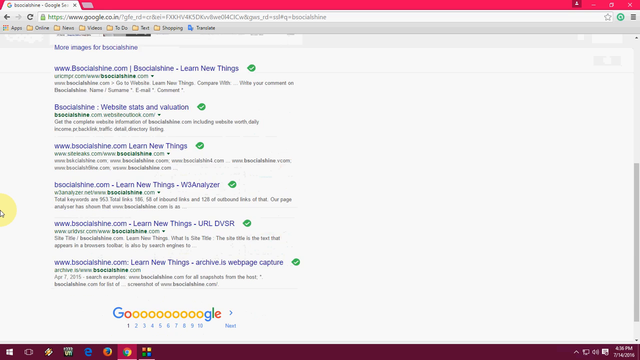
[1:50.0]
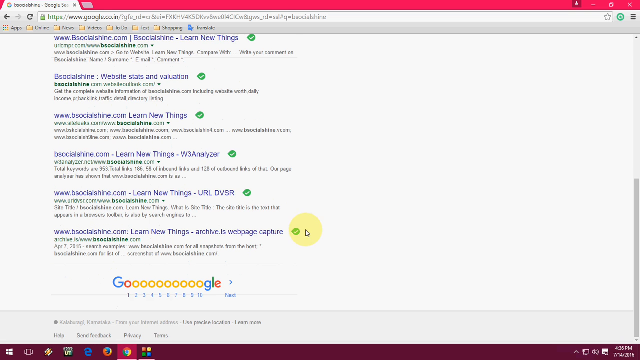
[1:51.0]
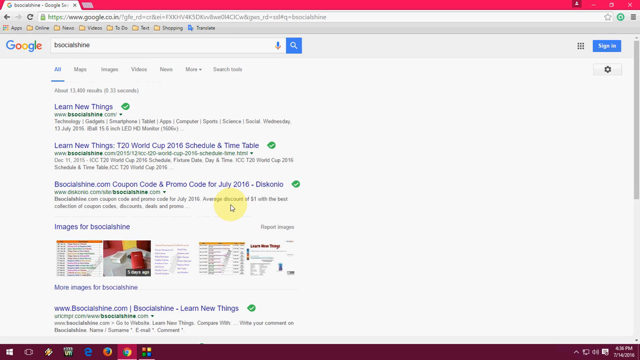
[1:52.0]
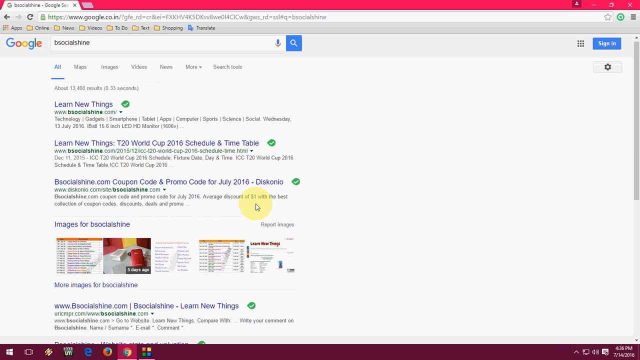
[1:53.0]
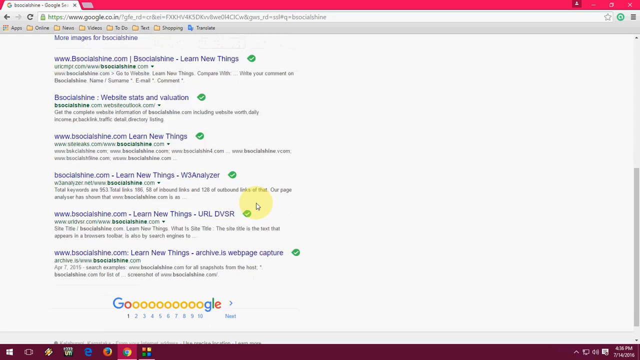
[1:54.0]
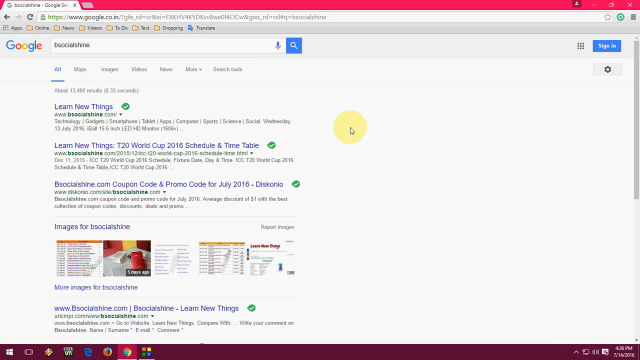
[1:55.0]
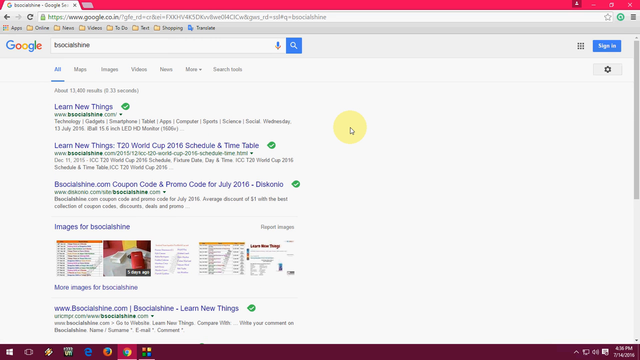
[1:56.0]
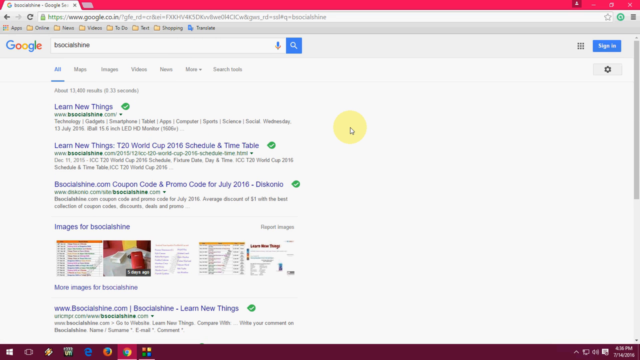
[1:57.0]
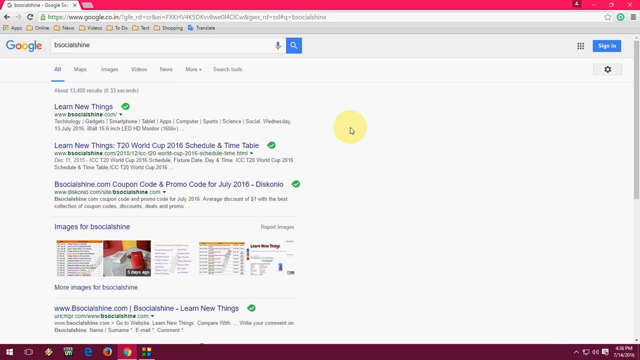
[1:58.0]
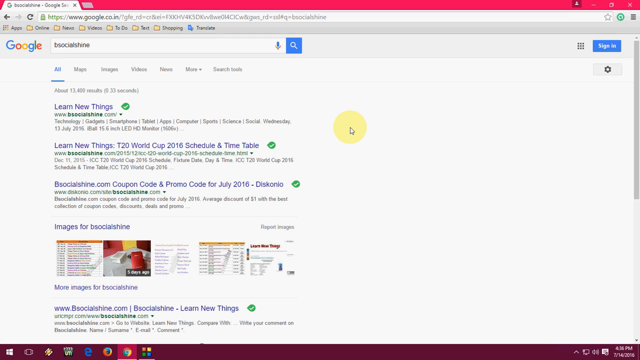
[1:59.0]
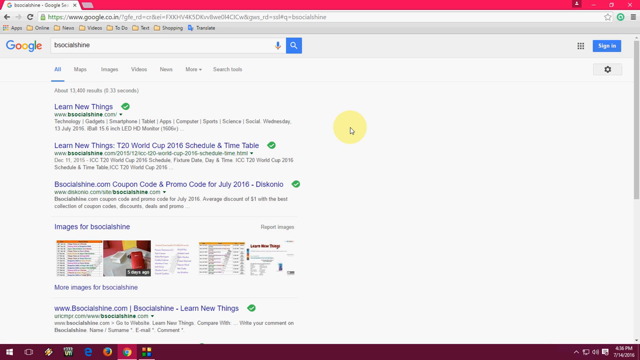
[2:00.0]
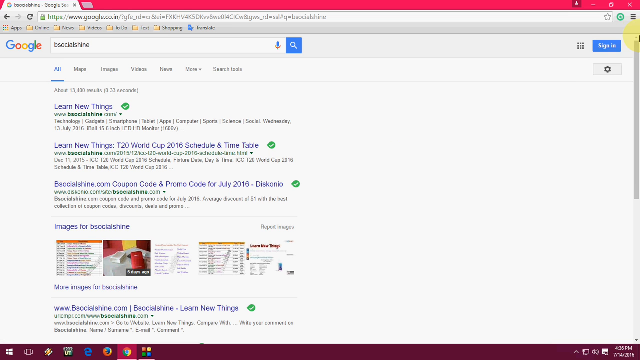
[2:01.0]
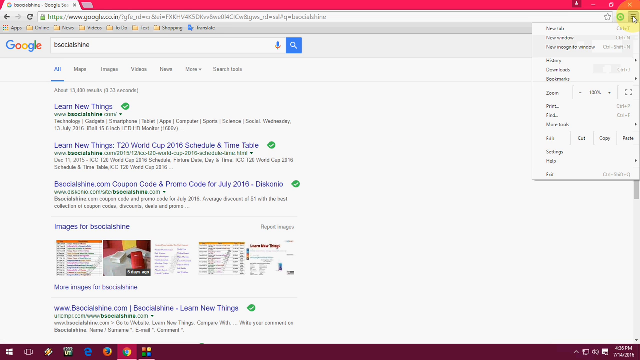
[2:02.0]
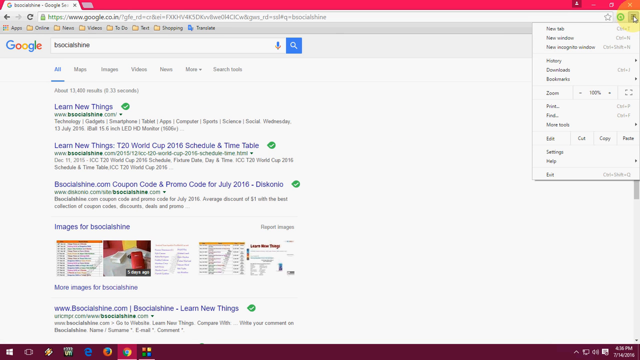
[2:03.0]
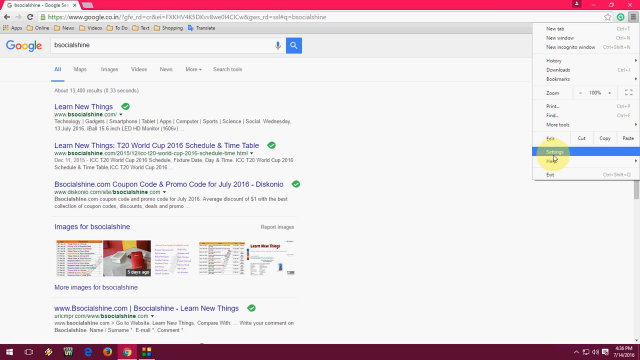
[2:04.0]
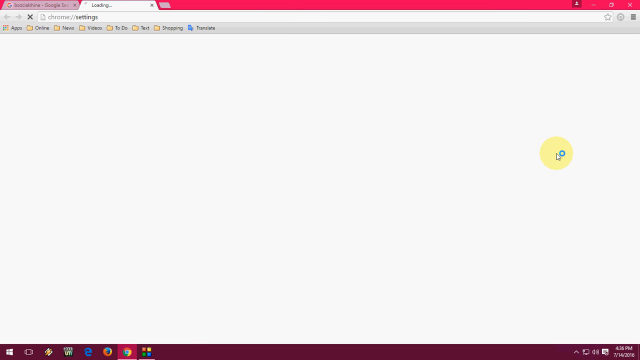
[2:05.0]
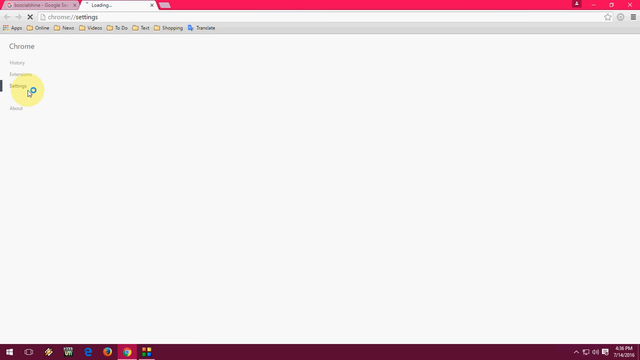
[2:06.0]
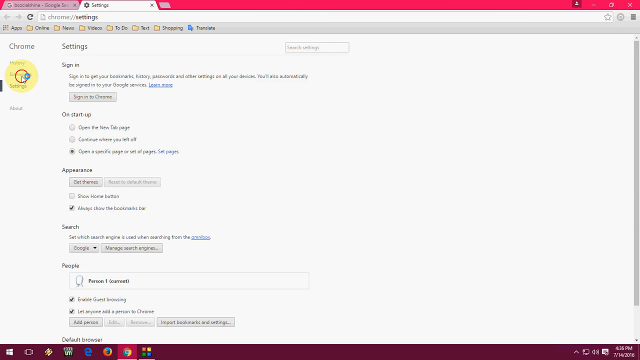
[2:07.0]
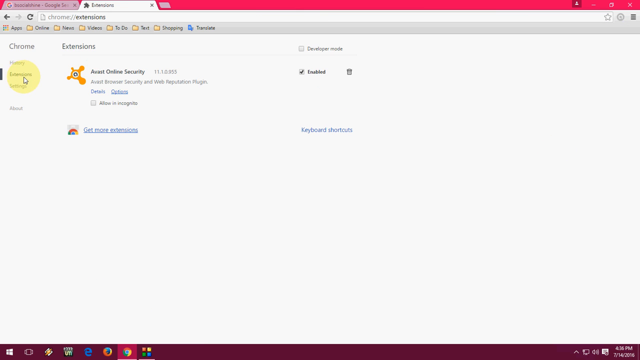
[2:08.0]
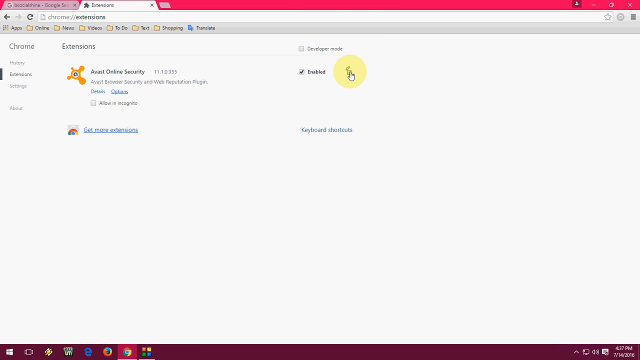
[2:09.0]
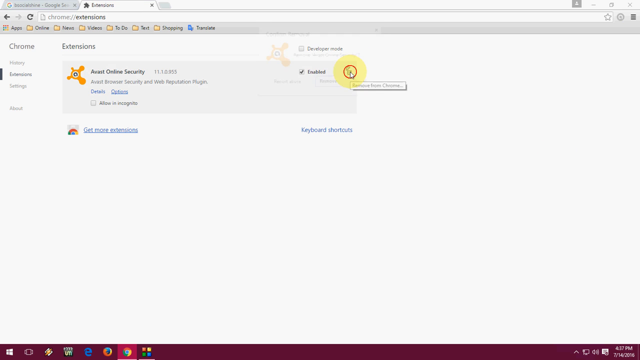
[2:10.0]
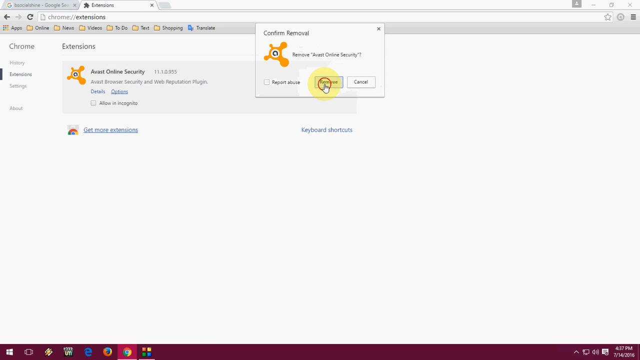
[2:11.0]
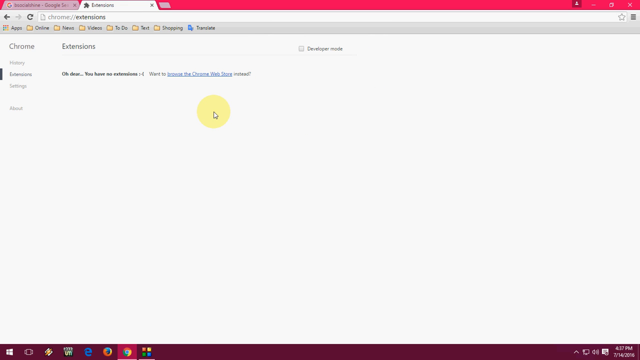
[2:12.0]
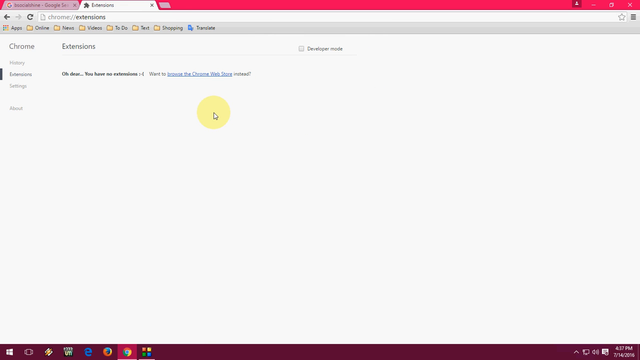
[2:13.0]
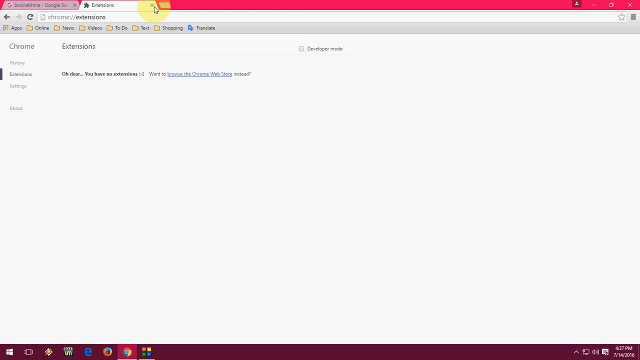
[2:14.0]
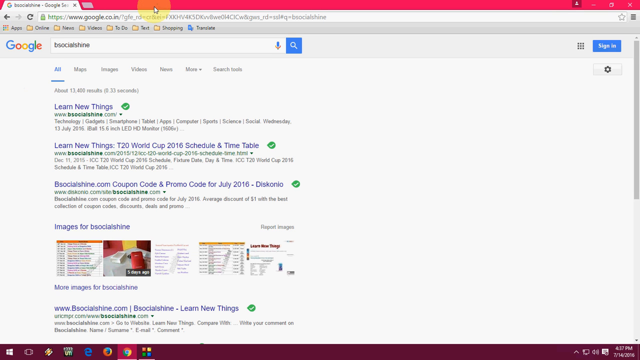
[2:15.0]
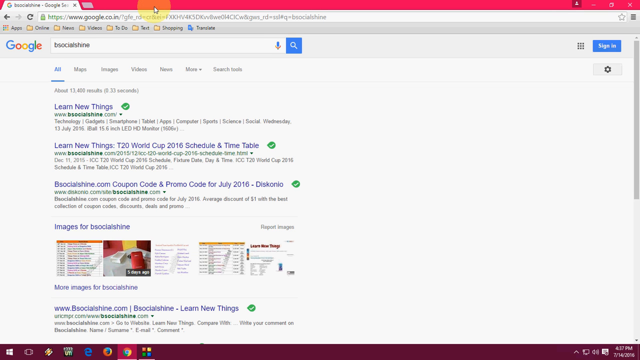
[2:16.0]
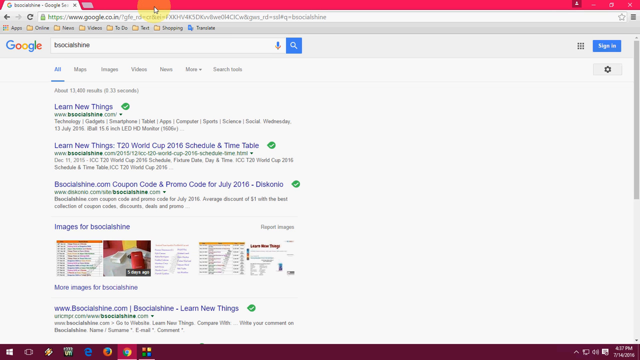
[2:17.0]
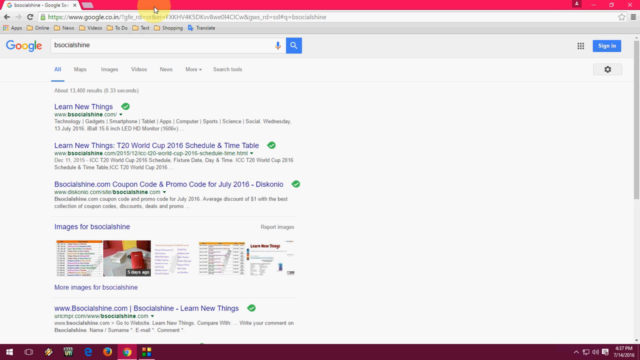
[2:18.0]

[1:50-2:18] The user scrolls down a web results page, the cursor shown in yellow. They stop at the top of the page, click on extension, and click on settings. They click on extensions again and click on accept. They close the extensions tab they opened, and the mouse hovers along the tab section of the web page. After clicking on extension, they click on the Avast extension and select to delete it from the computer.